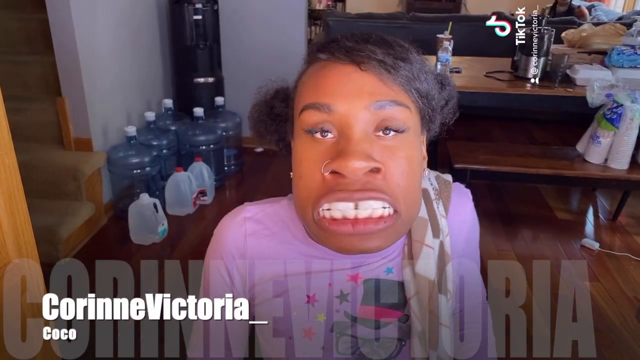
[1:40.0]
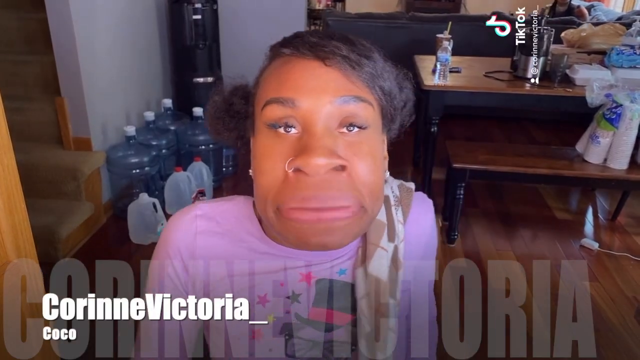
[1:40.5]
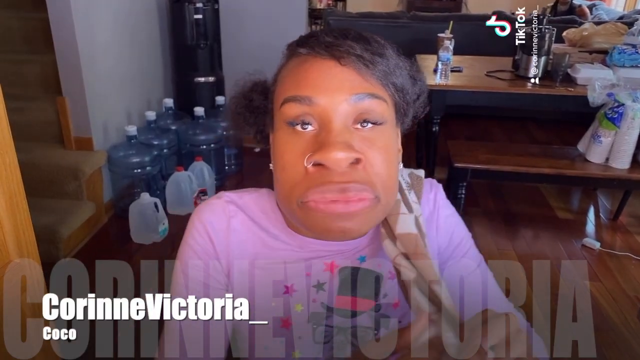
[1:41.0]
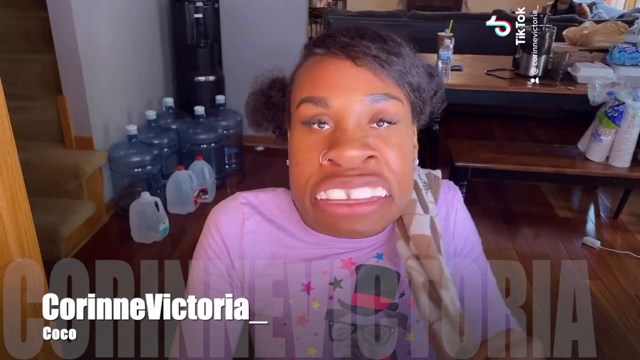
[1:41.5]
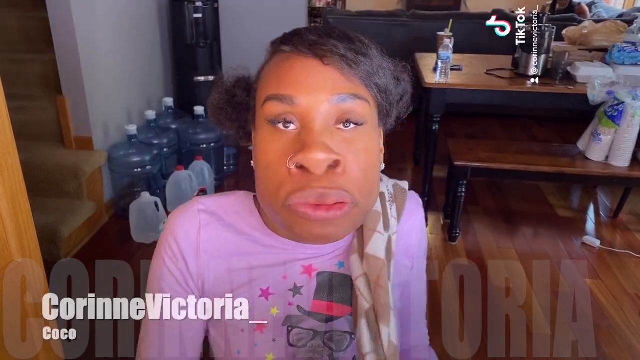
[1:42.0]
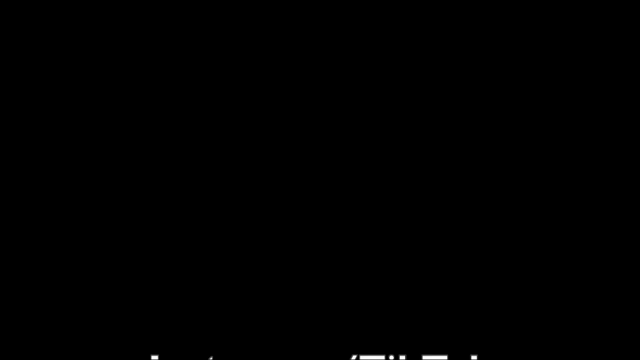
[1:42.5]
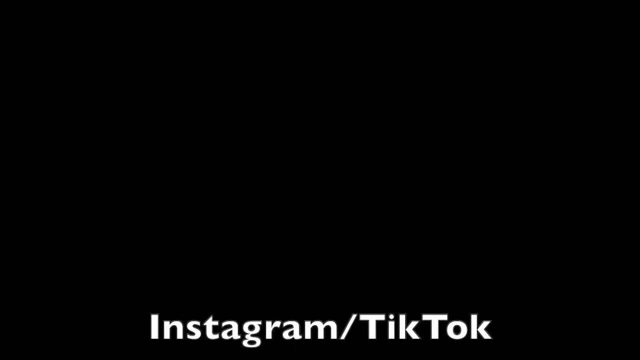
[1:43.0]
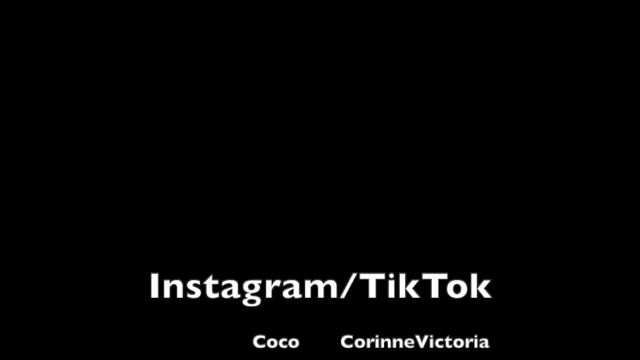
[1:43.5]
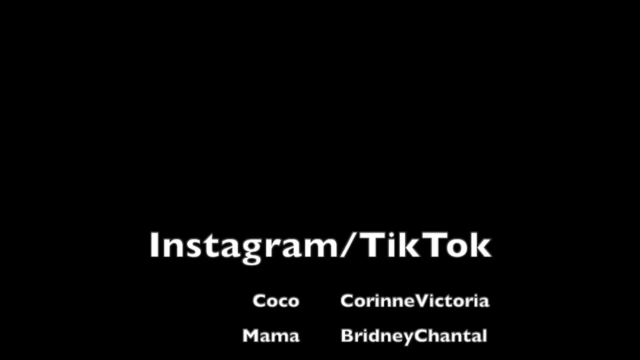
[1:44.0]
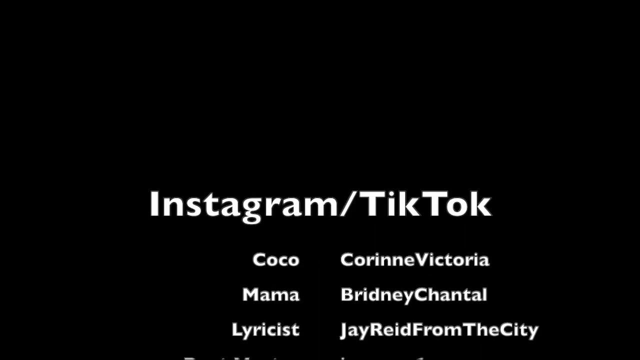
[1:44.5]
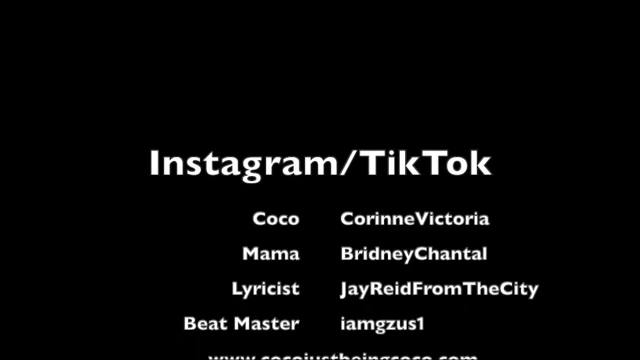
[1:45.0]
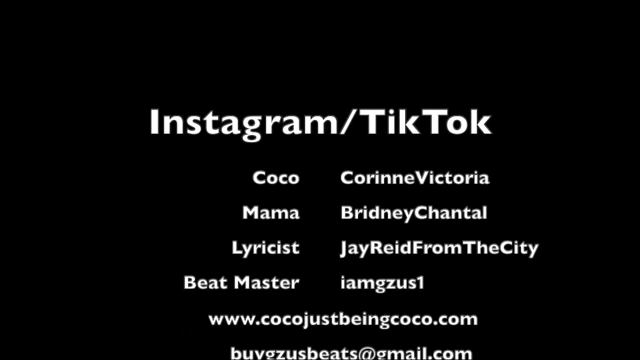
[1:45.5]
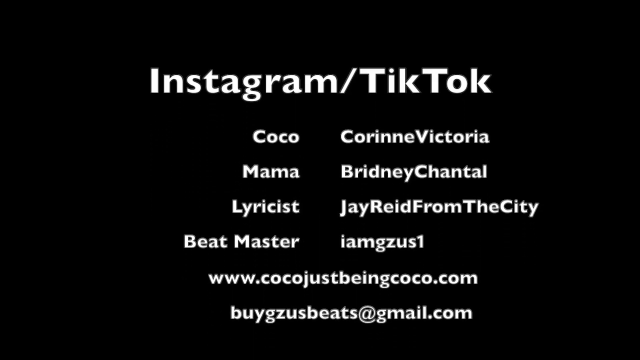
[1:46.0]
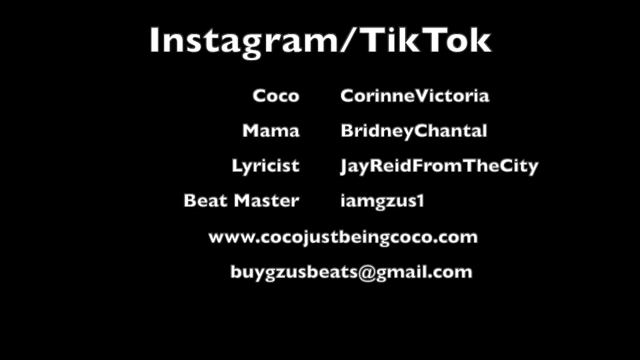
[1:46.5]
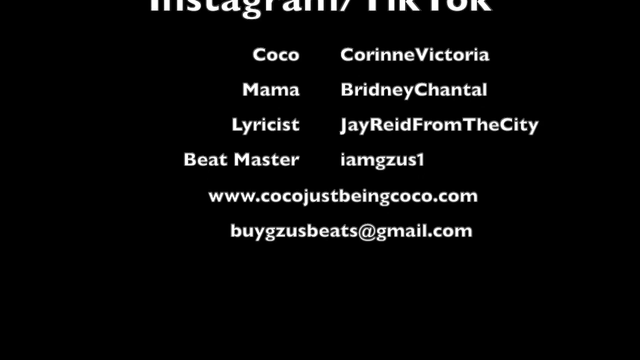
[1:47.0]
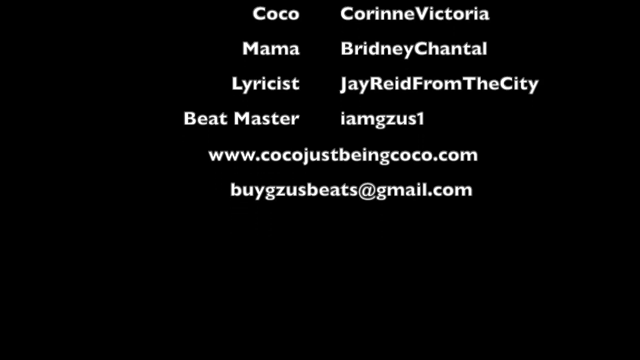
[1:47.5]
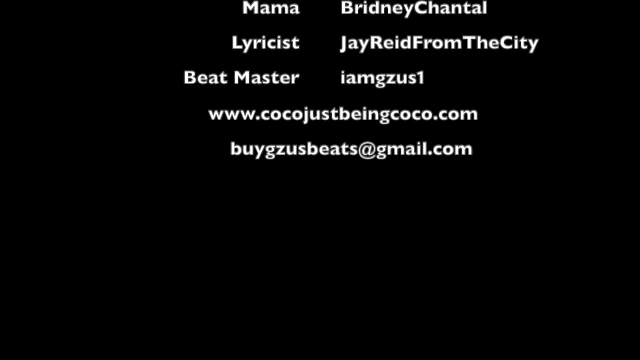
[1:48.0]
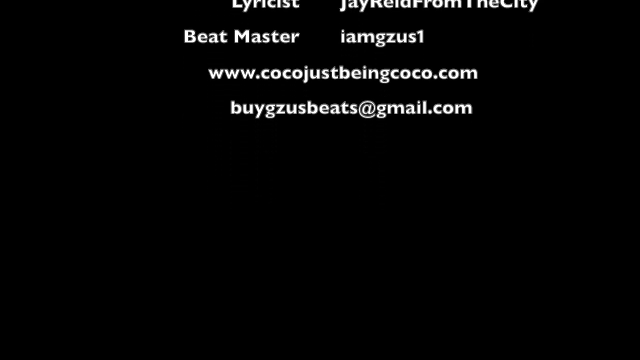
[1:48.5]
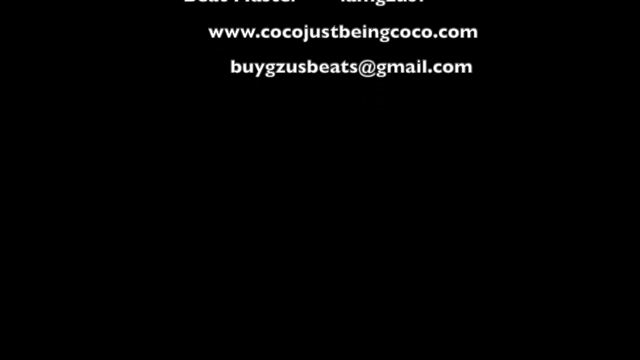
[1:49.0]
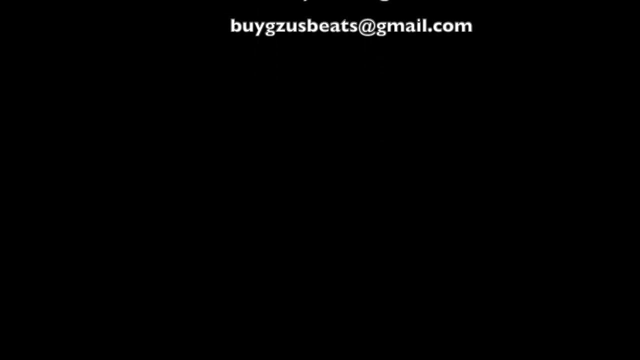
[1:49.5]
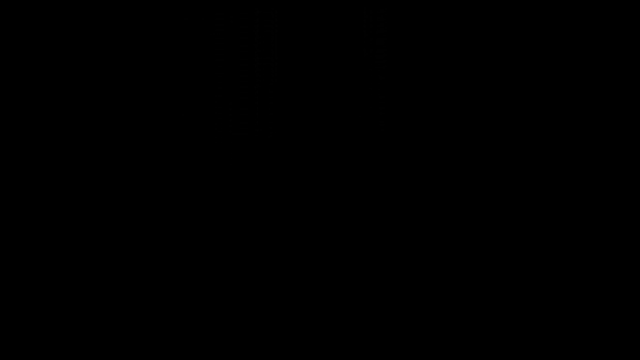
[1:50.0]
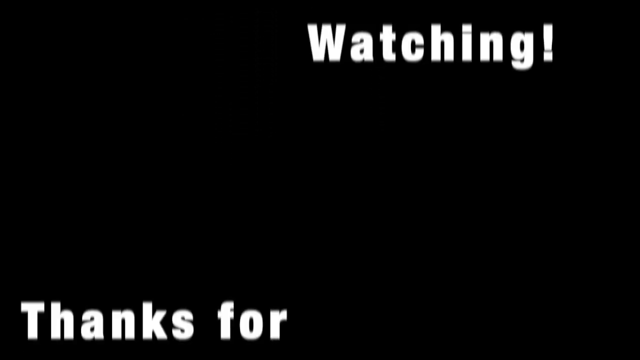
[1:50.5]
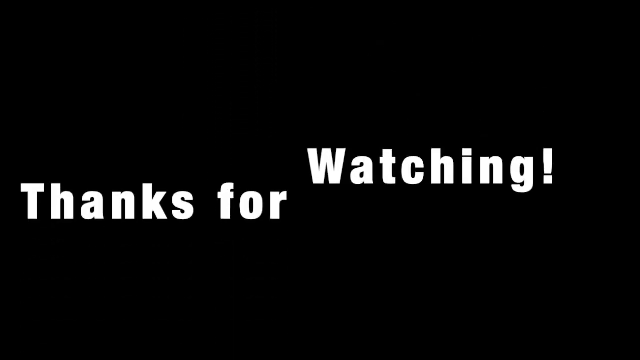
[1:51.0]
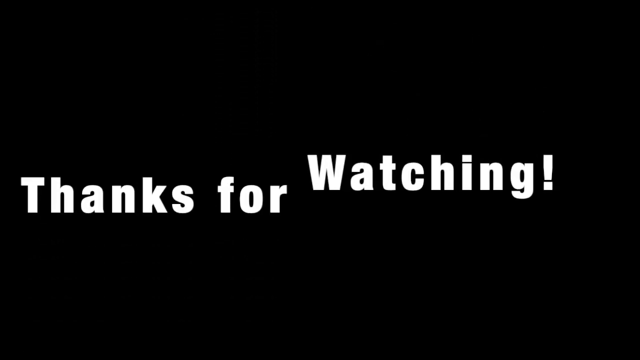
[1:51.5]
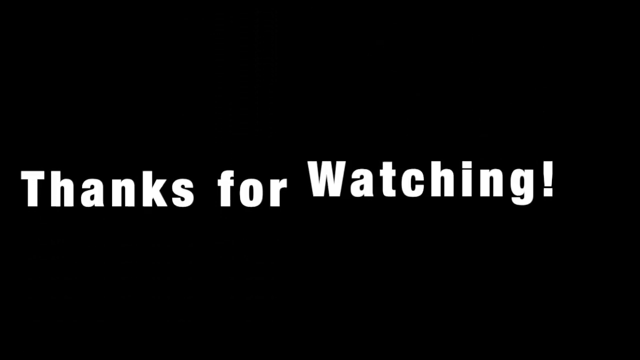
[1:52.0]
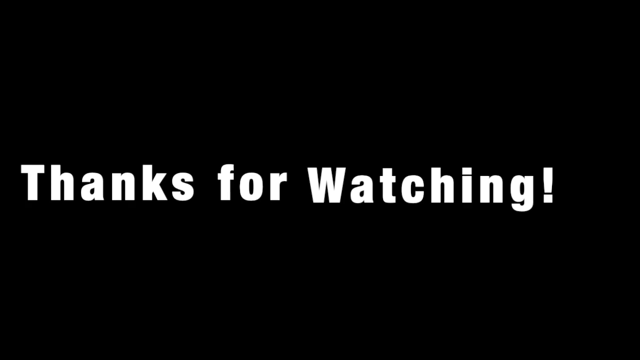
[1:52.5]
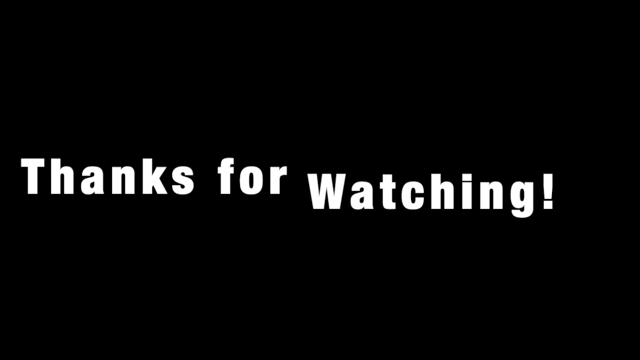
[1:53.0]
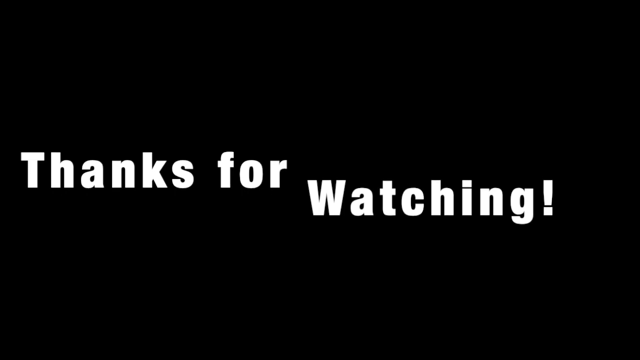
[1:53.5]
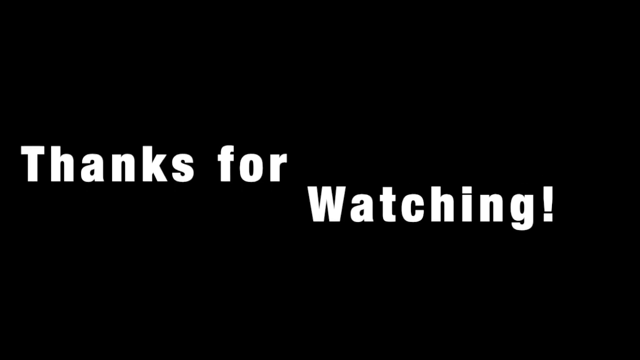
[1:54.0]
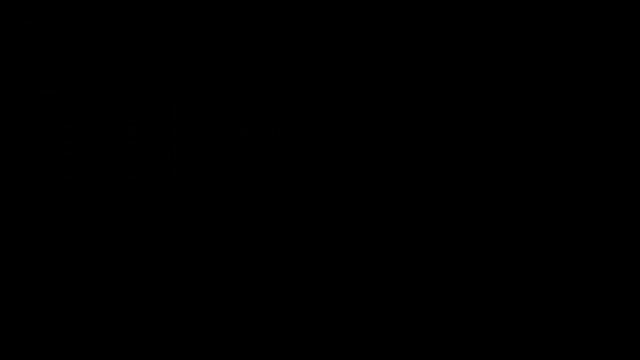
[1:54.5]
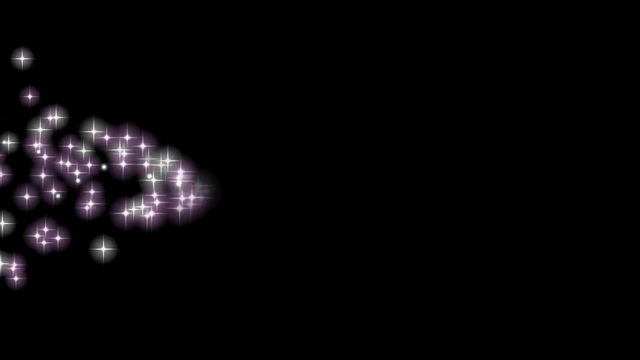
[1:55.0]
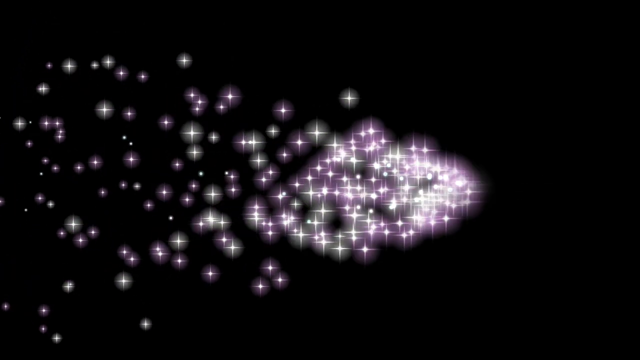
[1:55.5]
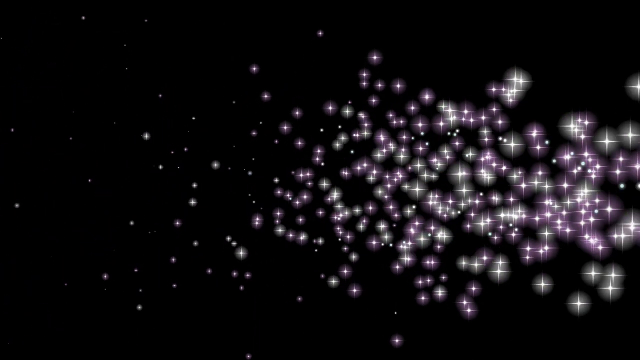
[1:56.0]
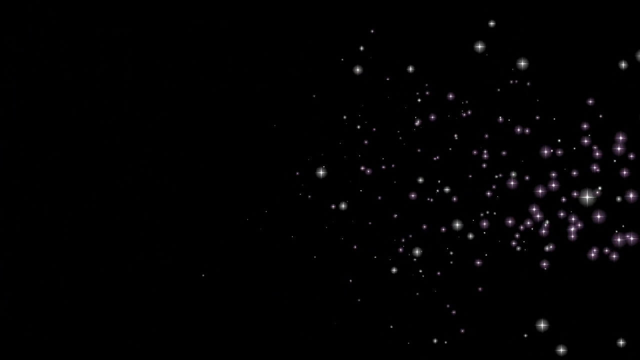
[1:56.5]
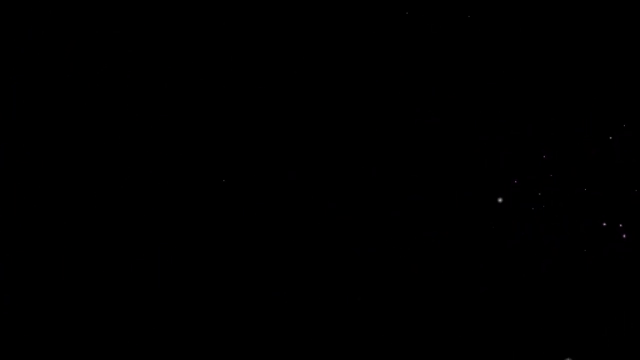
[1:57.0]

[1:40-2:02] Text at the bottom says "Corrine Victoria," with "Coco" underneath it, over the little girl who still wears the facial filter and her pink shirt with the dog in glasses and a top hat with a pink stripe, stars all around it. Behind her are some large water jugs and small water bottles, and someone else may be sitting on the couch behind her. Credits then roll: "Instagram/TikTok Coco is Corrine Victoria, Mama is Brittany Chantel, lyricist is Jay Ray from the city and the beat master is I Am Jesus One. www.cocoajustbeingcocoa.com"